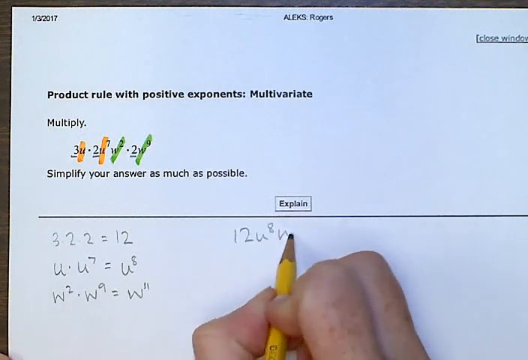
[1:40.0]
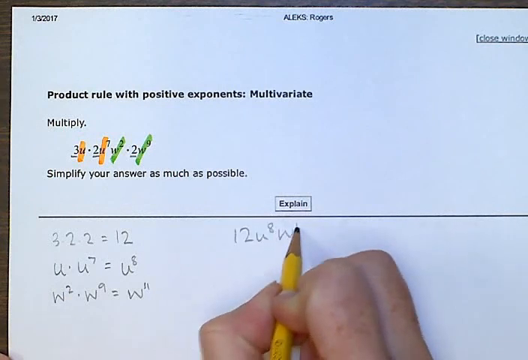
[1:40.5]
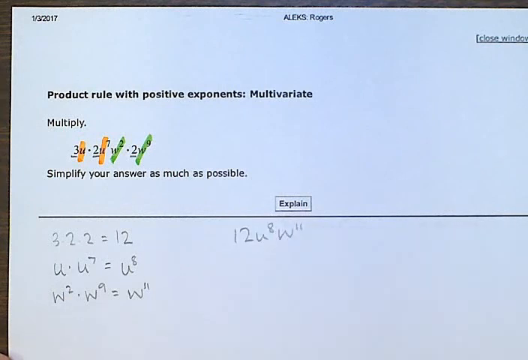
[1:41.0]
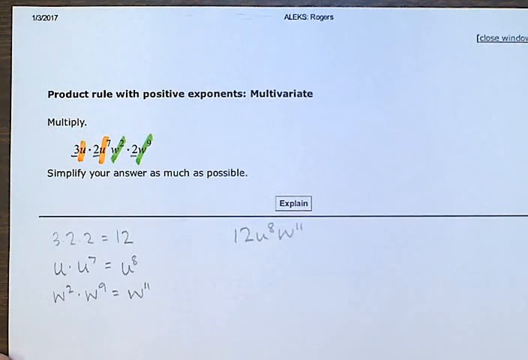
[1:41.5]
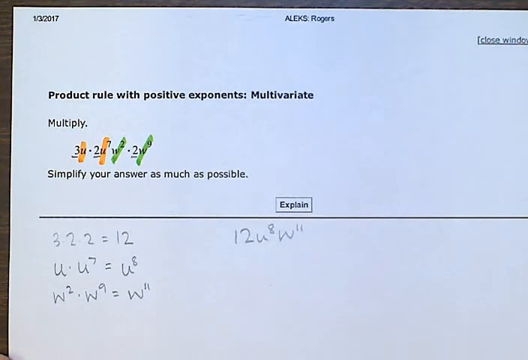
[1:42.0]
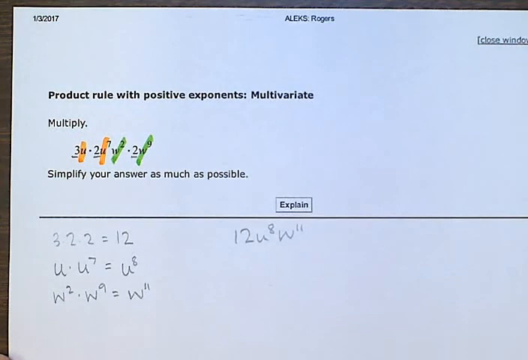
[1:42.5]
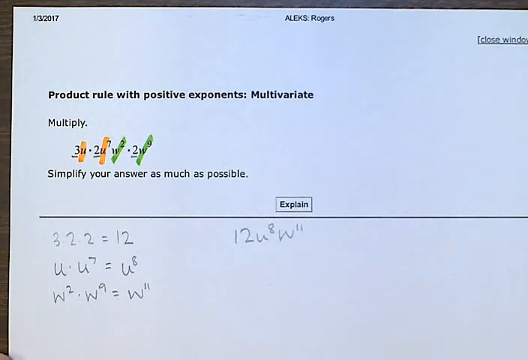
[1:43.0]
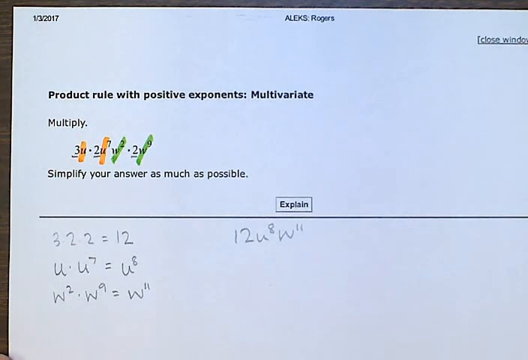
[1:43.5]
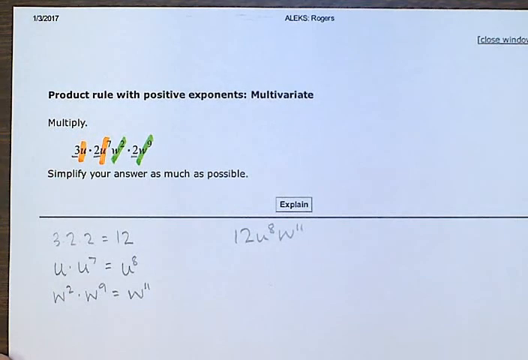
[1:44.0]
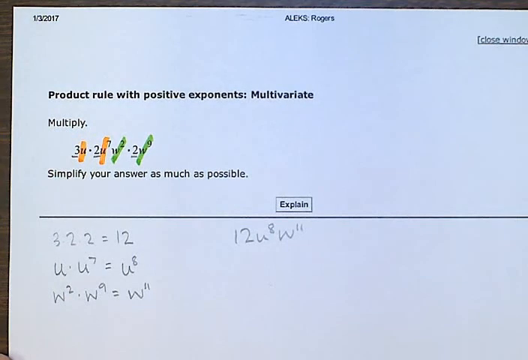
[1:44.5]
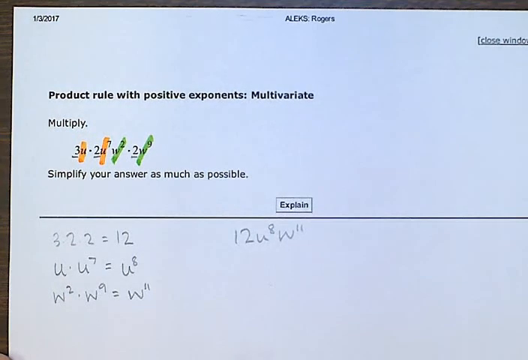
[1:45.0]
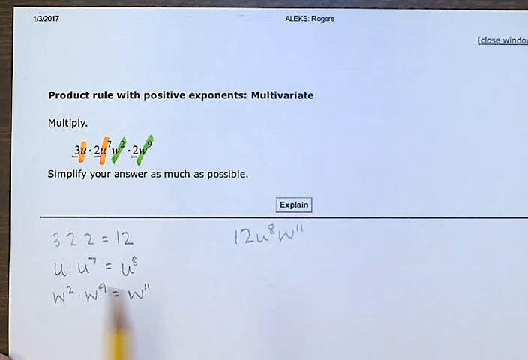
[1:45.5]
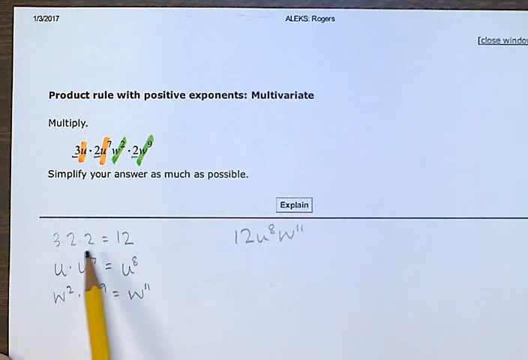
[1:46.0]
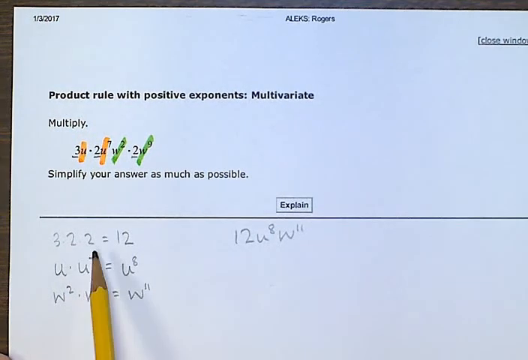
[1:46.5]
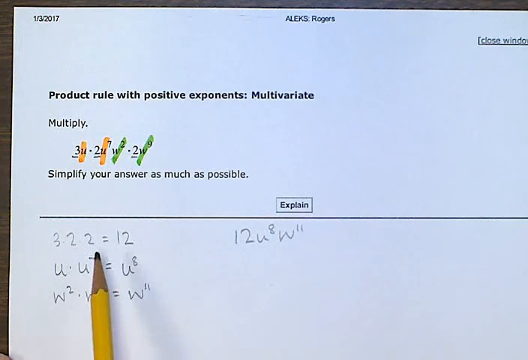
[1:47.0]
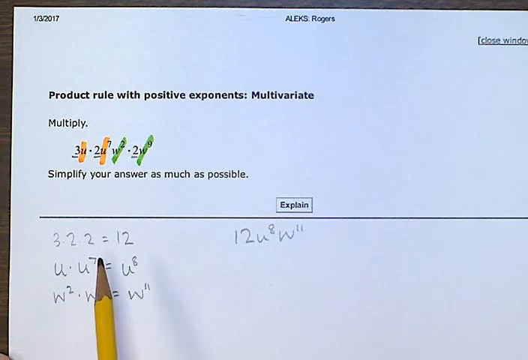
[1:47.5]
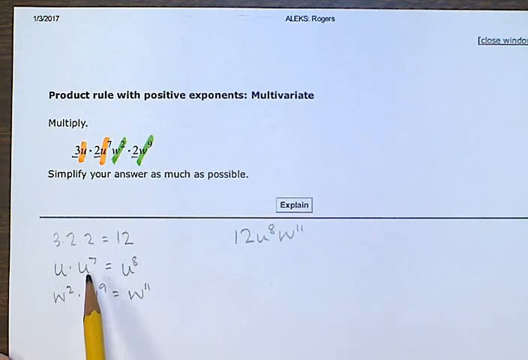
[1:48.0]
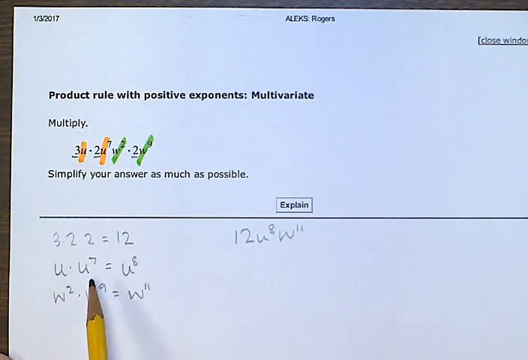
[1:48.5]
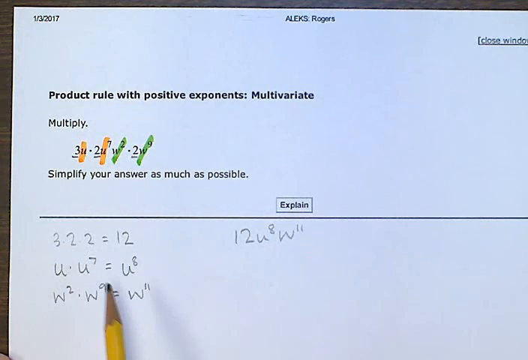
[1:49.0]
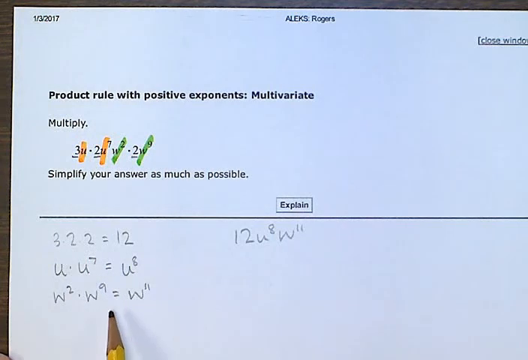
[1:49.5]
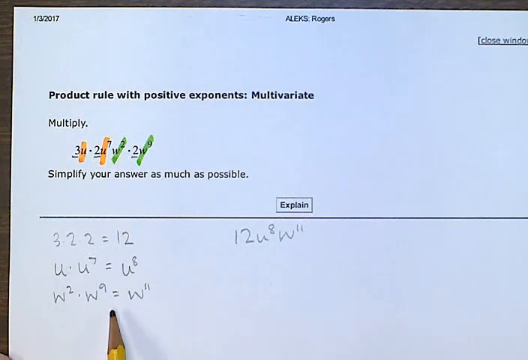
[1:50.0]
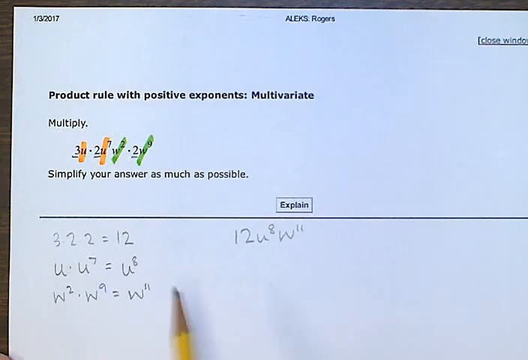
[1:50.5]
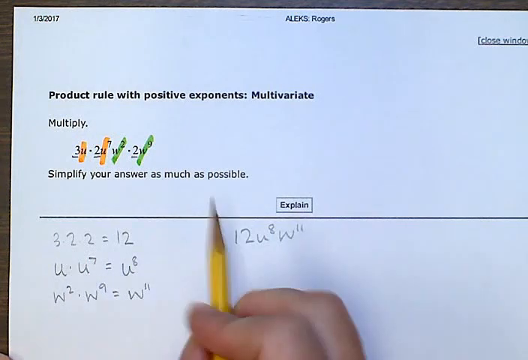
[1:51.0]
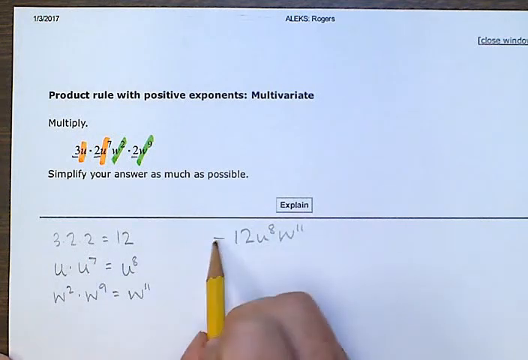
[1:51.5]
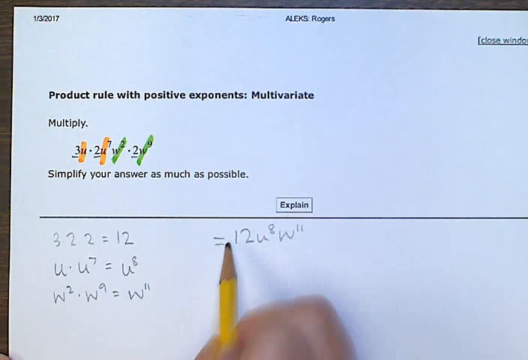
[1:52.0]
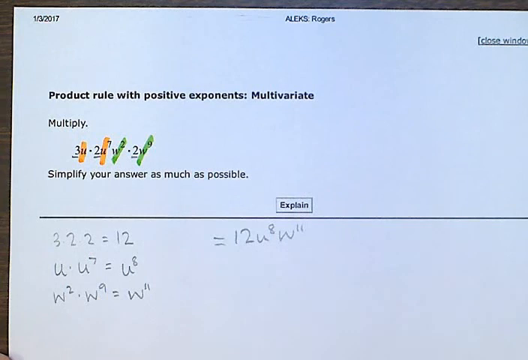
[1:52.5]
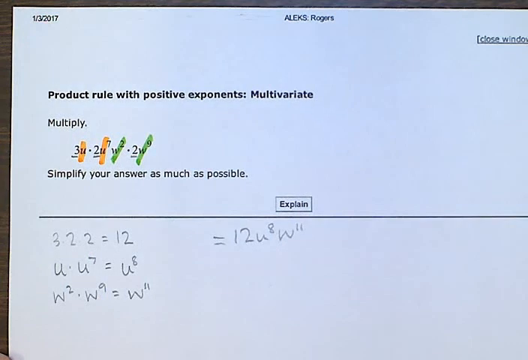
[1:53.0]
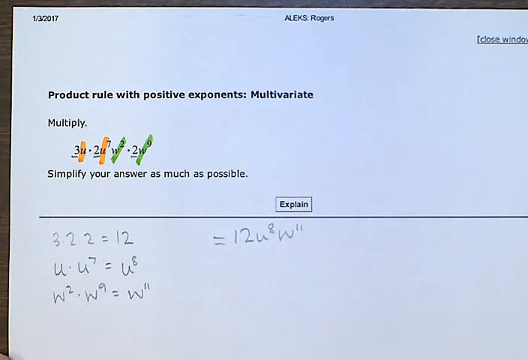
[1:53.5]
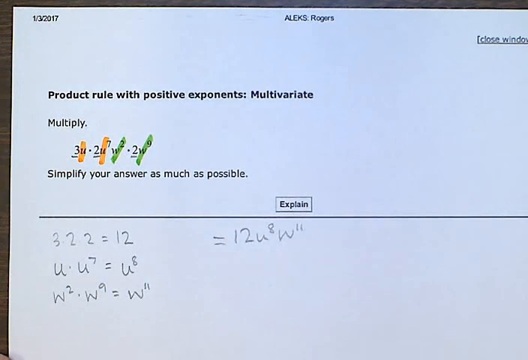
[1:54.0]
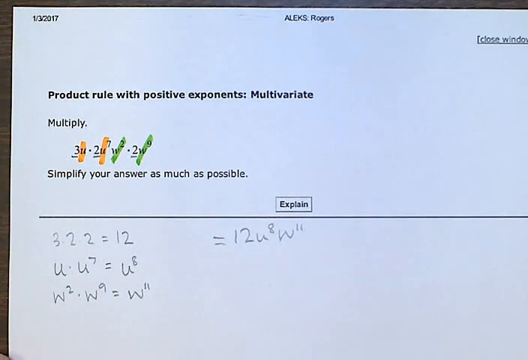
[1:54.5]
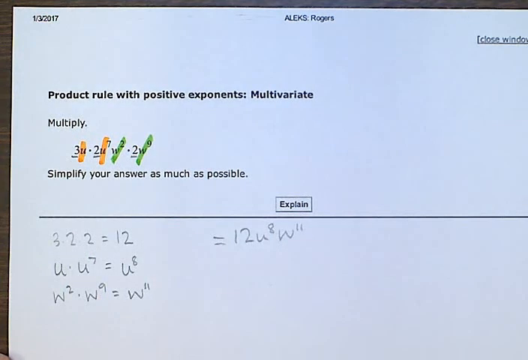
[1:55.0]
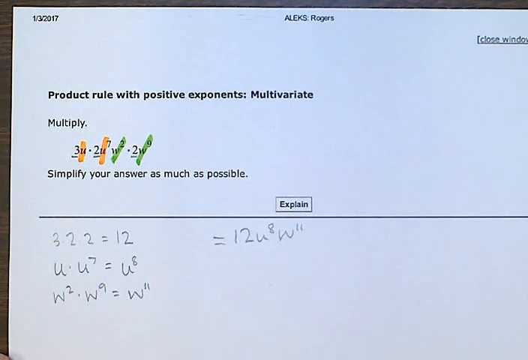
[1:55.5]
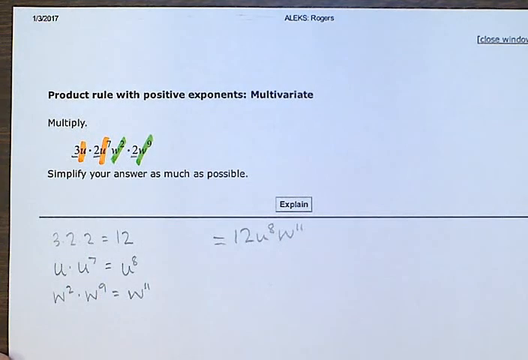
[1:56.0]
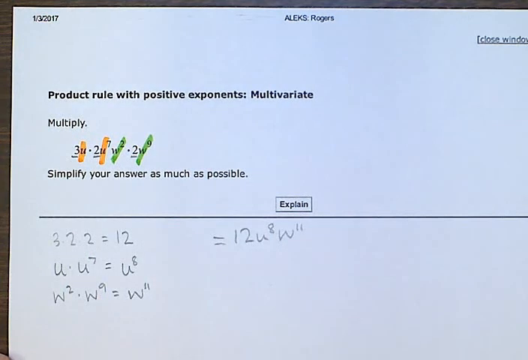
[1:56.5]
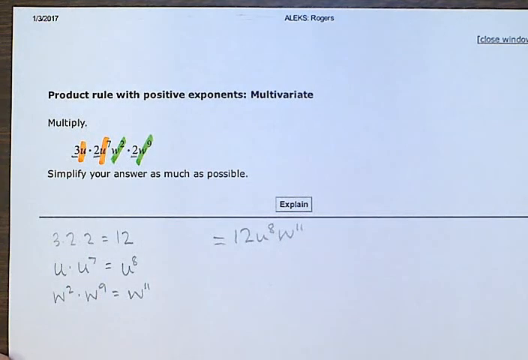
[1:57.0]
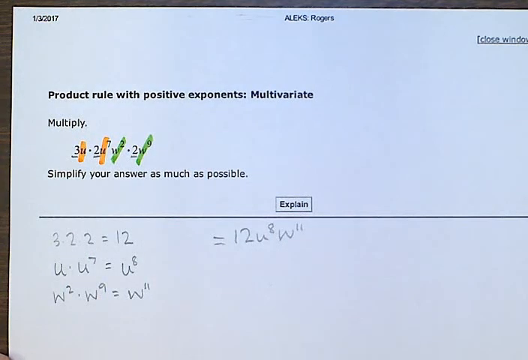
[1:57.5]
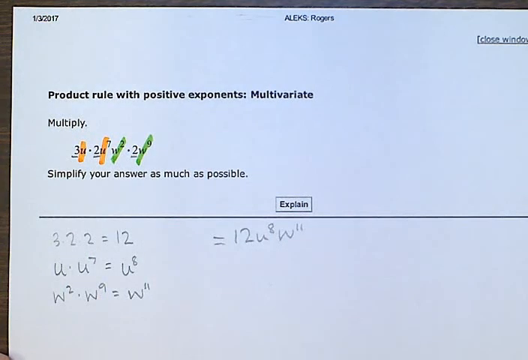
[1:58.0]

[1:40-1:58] A yellow pencil is at the centre bottom of the screen, held with a thumb and two fingers. They write the rest of the sum, which now reads 12 U 8 W 11. The pencil and hand move down and out of view. The pencil then appears in the bottom left-hand corner, with about a quarter of it visible pointing upwards at the sum 3 2 2 equals 12. It hovers over the second sum, U dot U 7 equals U 8, then over the third sum, W 2 dot W 9 equals W 11, then moves to the right and hovers over equals 12 U 8 W 11. Finally the pencil drops down until it is off screen, and no more pencil markings are made.